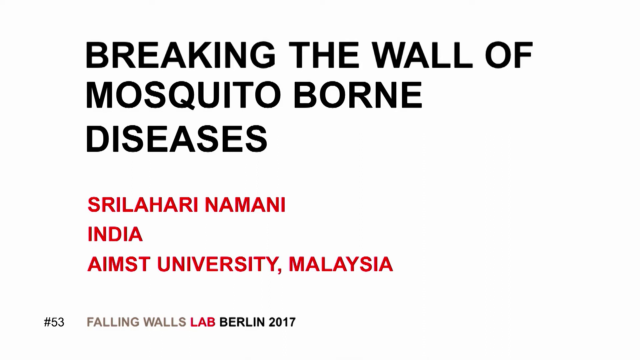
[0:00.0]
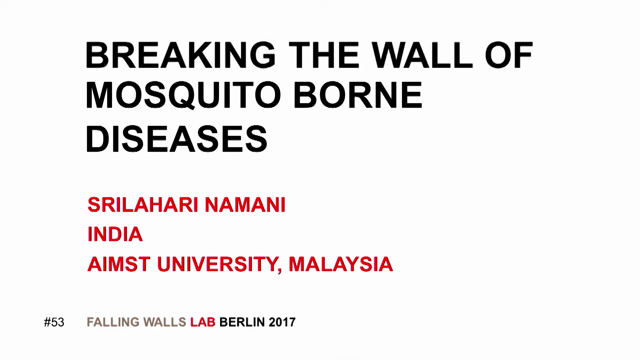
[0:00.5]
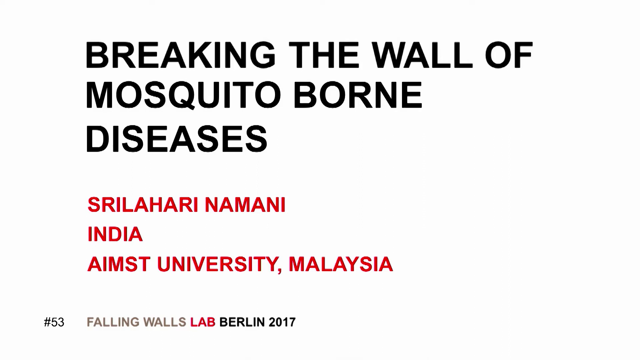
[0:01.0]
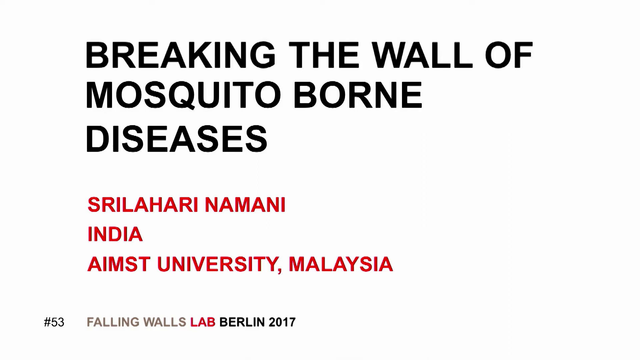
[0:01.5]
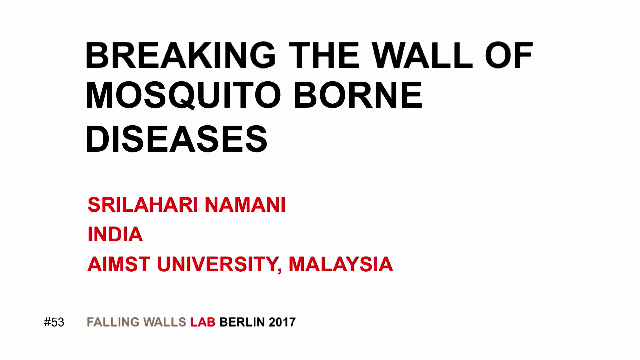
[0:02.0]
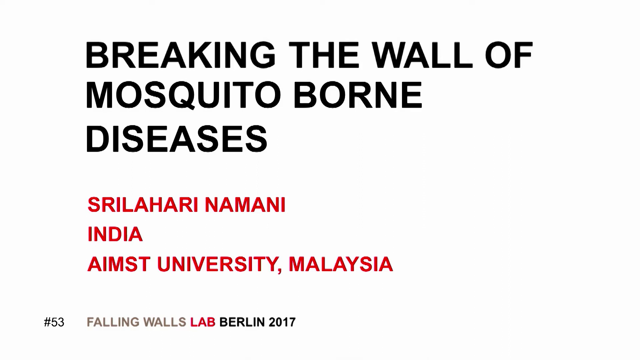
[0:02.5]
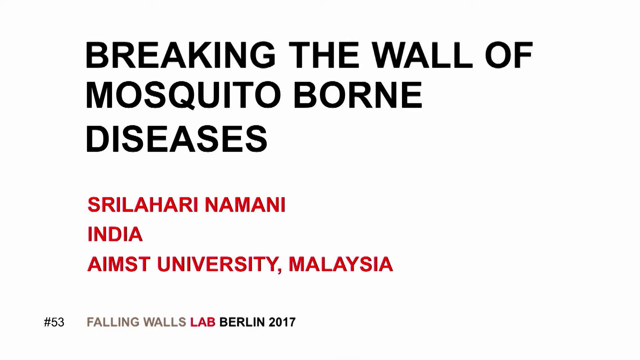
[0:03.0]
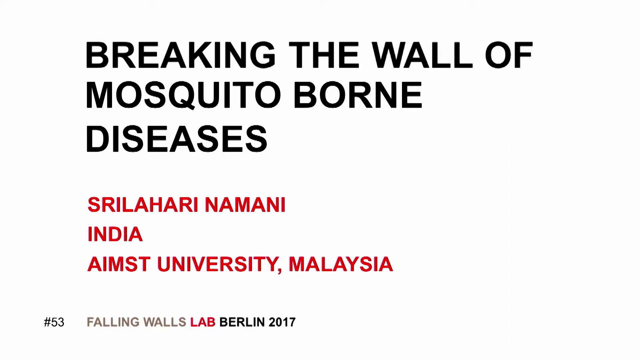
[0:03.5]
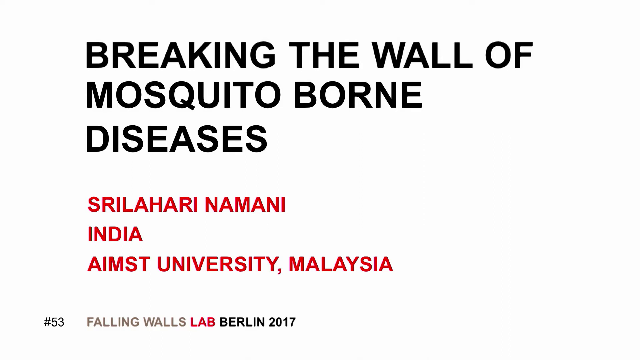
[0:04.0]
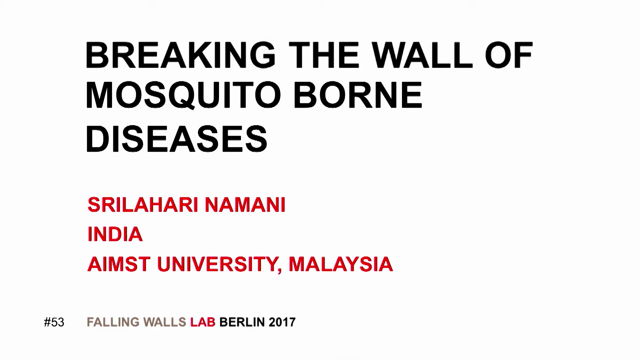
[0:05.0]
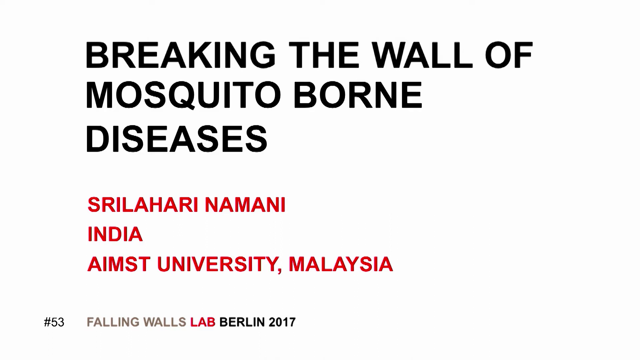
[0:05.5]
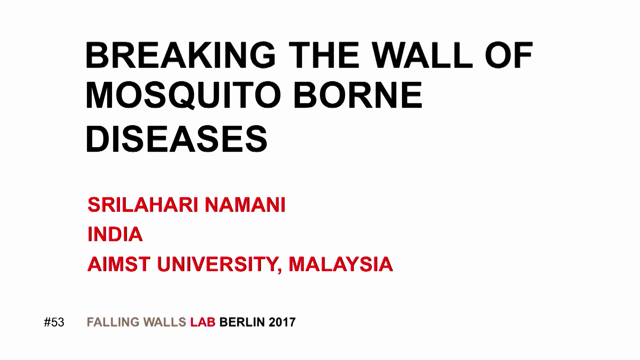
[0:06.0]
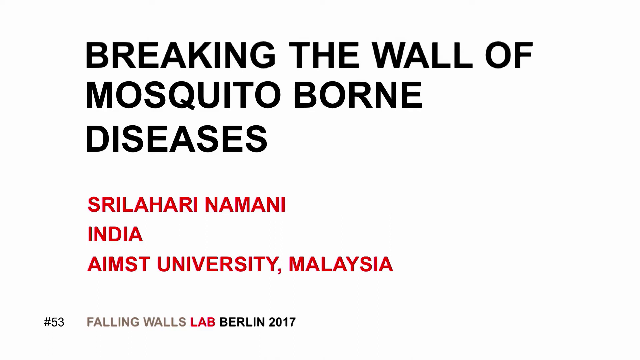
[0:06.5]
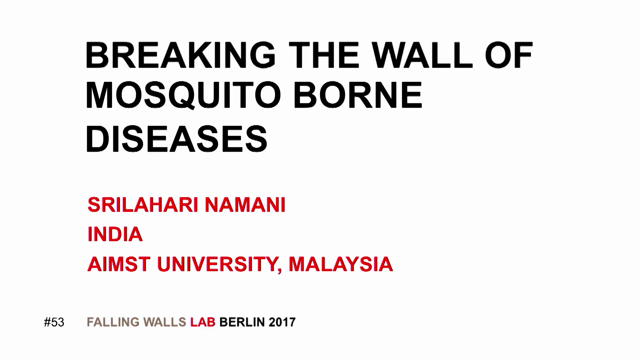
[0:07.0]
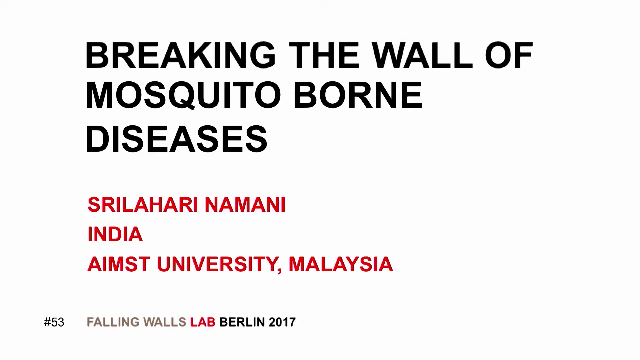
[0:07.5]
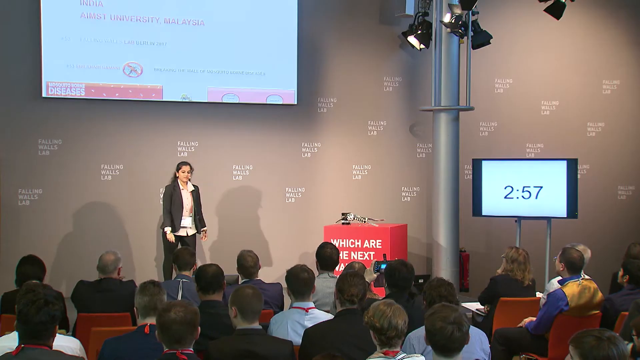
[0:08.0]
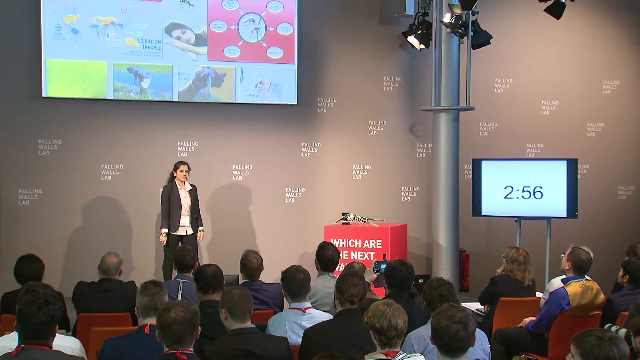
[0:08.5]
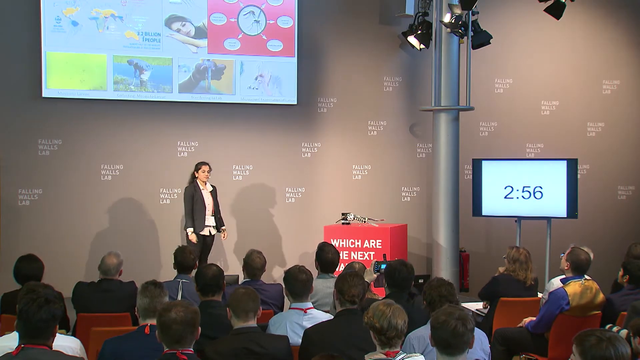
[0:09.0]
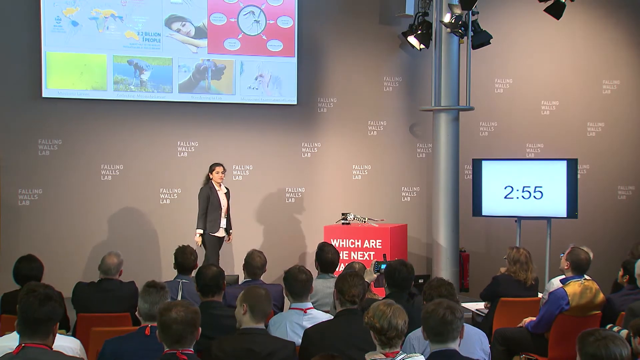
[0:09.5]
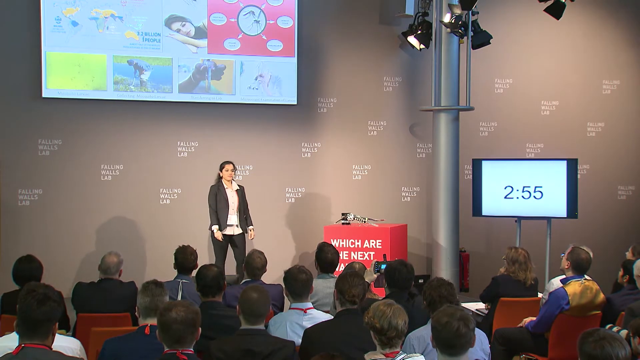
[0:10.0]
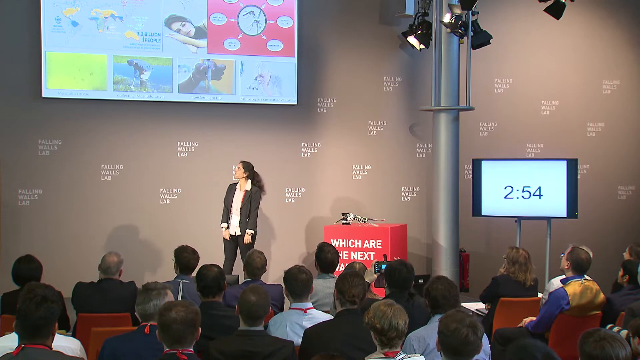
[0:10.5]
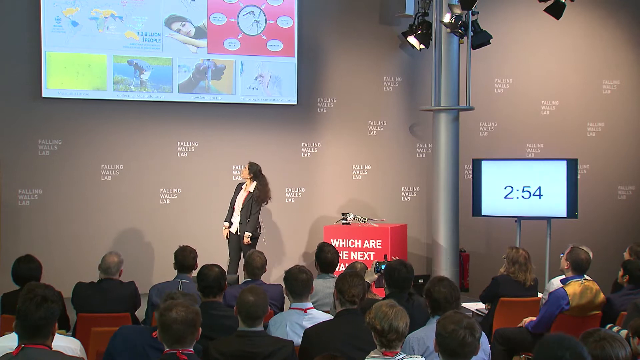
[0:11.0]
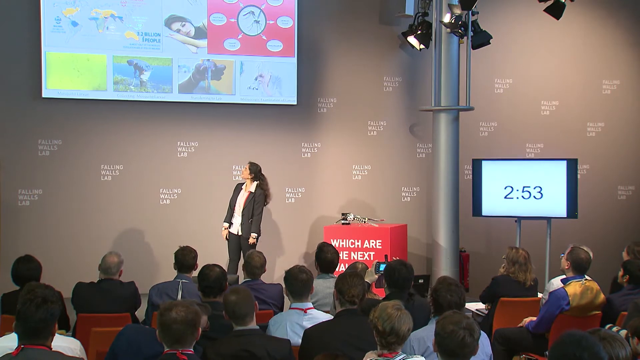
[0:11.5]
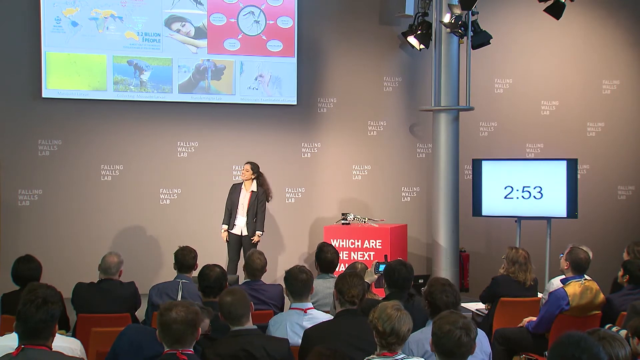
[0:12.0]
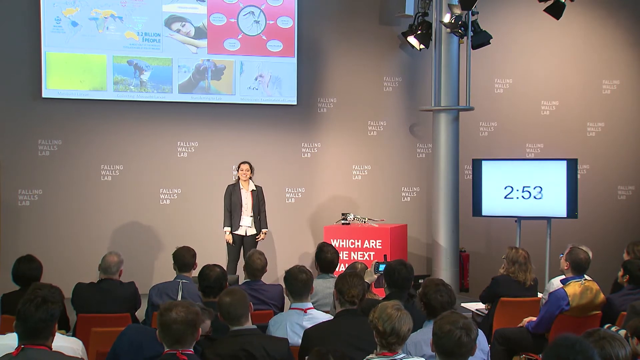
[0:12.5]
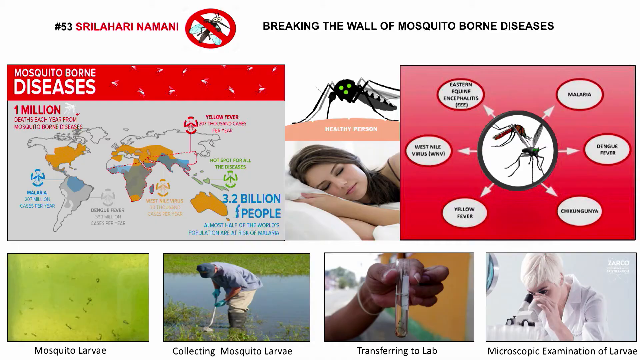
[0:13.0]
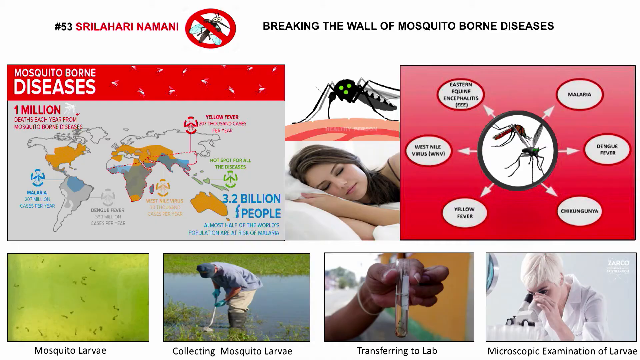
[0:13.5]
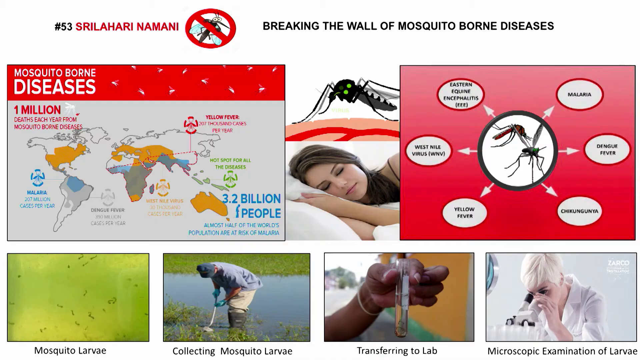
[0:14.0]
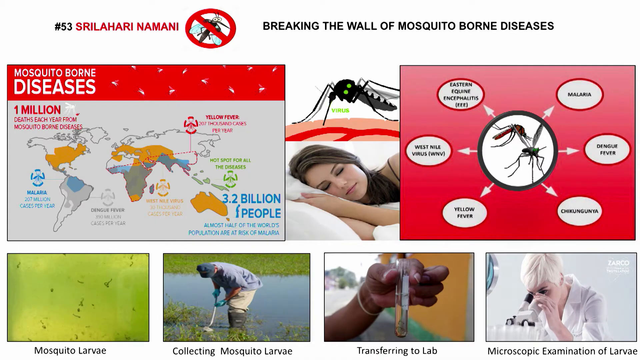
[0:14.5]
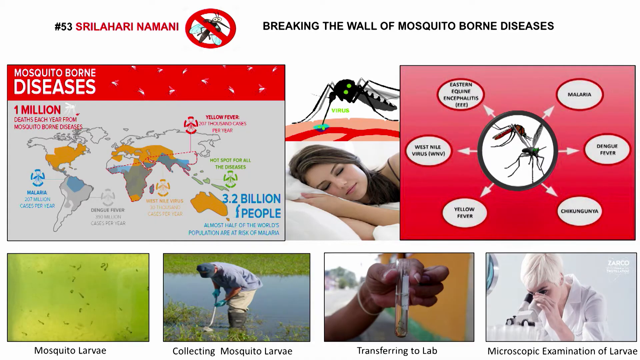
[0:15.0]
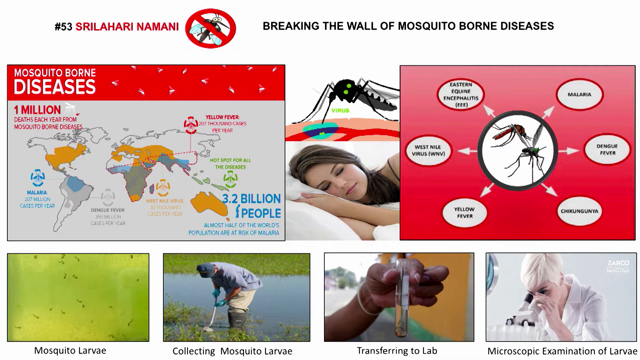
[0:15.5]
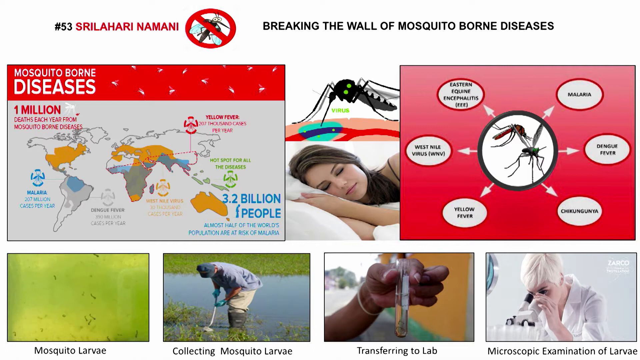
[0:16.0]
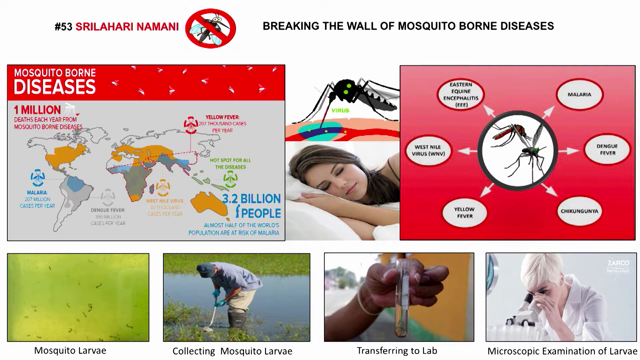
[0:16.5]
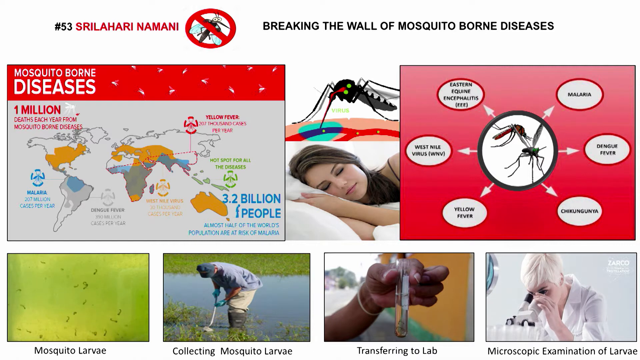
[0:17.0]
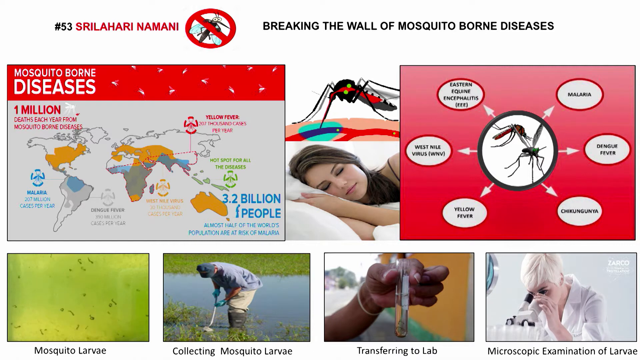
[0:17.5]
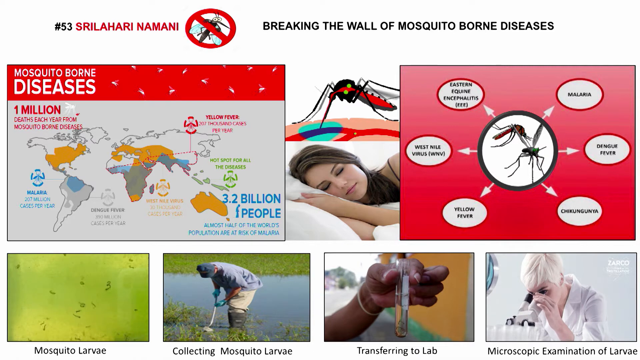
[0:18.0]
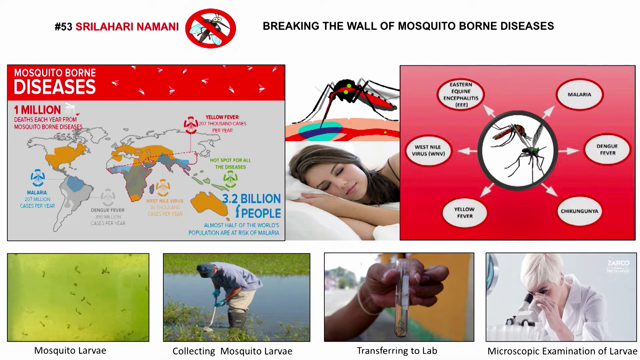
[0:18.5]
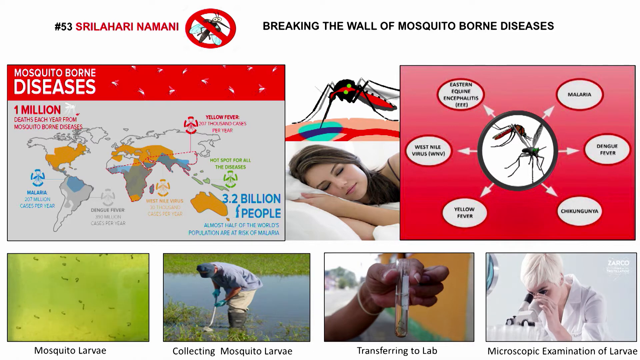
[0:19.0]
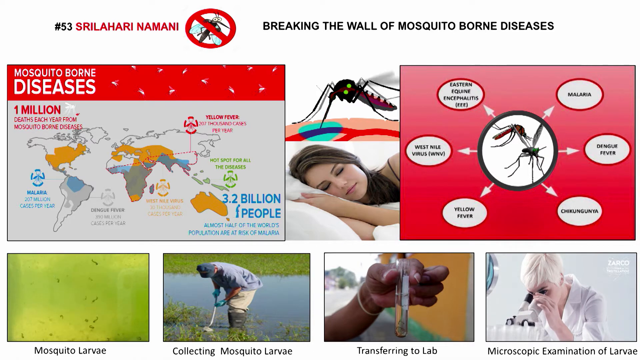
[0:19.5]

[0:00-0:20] The video opens on a white background with large, black, all-caps text across three lines: "breaking the wall of", "mosquito-borne", "diseases". After a space, smaller red all-caps letters read "Sri Lahari Namani", with "India" below it and "Ames University, Malaysia" below that. At the very bottom is "Falling Walls Lab Berlin 2017", with "#53" to its left. The shot then cuts to an auditorium or room with a stage. Toward the right of the room, a very thick metal pillar or pipe goes all the way to the roof, with large black lights attached to it. To the right of the pillar, a flat-screen TV is mounted on two silver poles. It shows a white page with the numbers "2:56", possibly two hours and 56 minutes, though the meaning is unclear. There is also a little red counter with white all-caps writing that cannot be read, and some kind of metal device on it. A woman is giving a presentation on stage. She wears black pants, a black suit jacket and a light pink shirt, has a mic on, and her long black hair is tied back. A screen is mounted on the wall above her head.